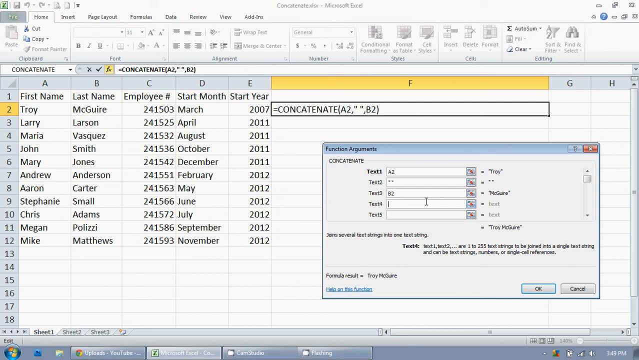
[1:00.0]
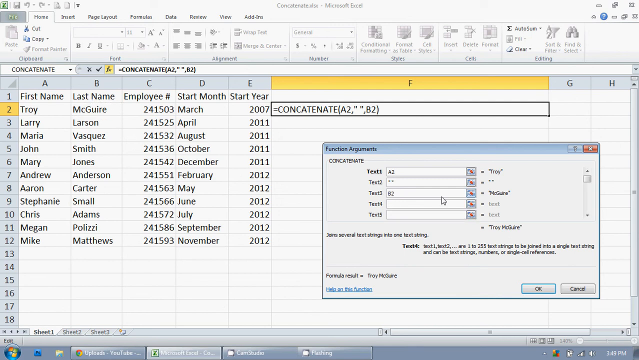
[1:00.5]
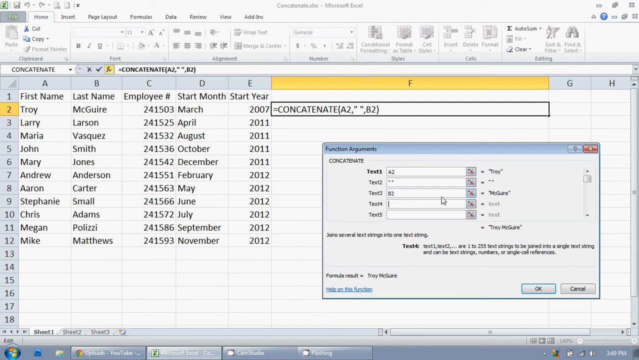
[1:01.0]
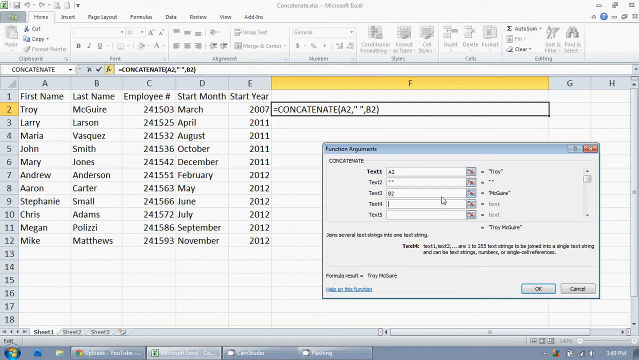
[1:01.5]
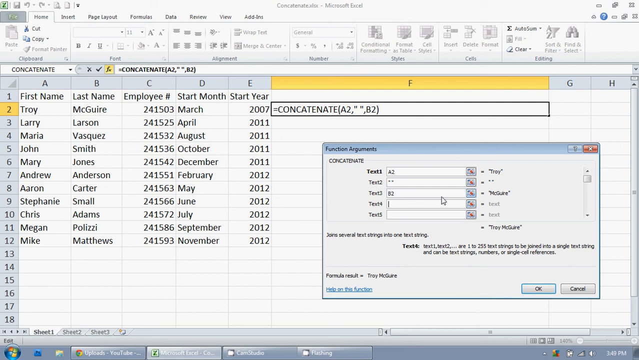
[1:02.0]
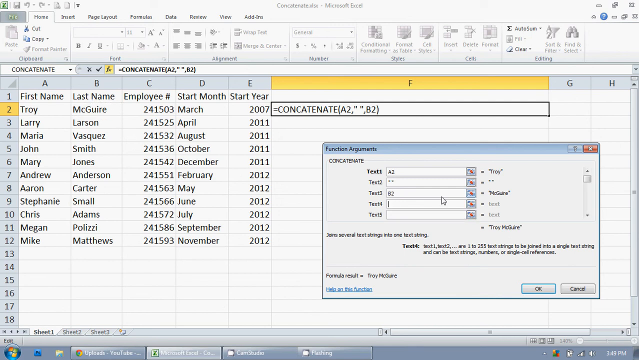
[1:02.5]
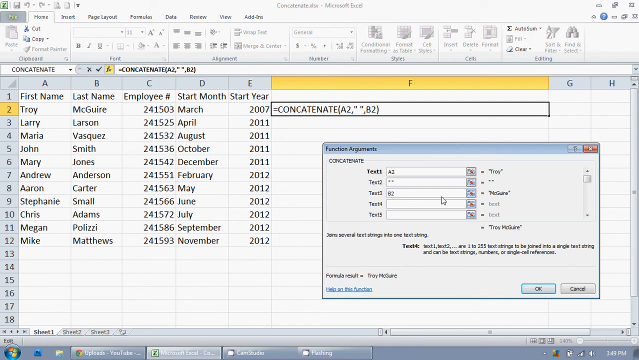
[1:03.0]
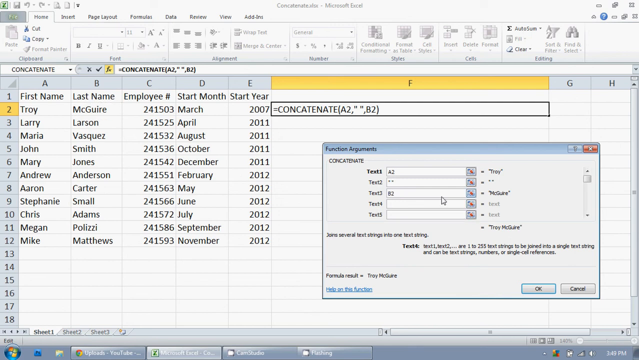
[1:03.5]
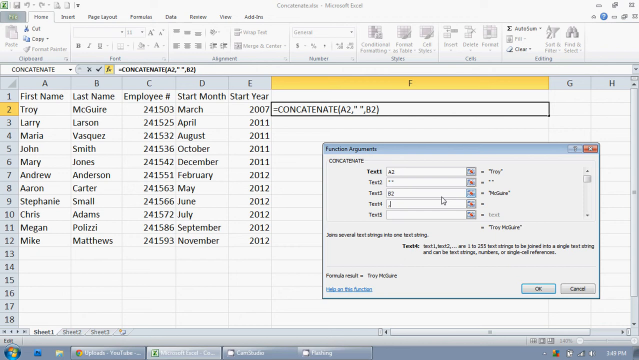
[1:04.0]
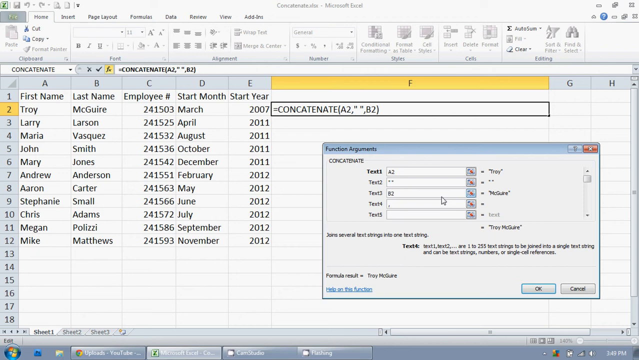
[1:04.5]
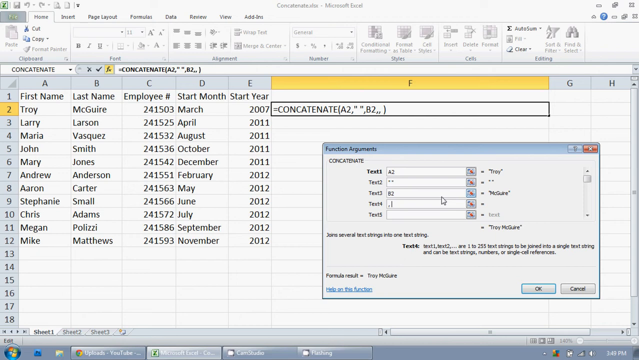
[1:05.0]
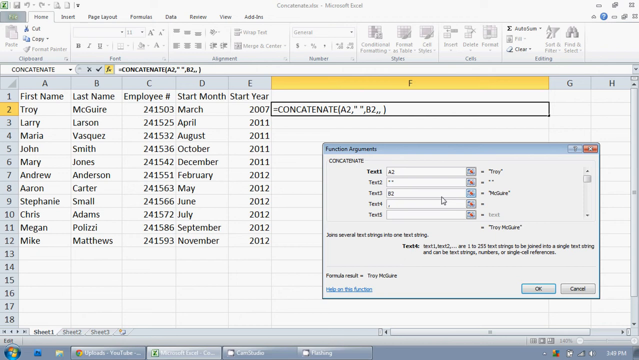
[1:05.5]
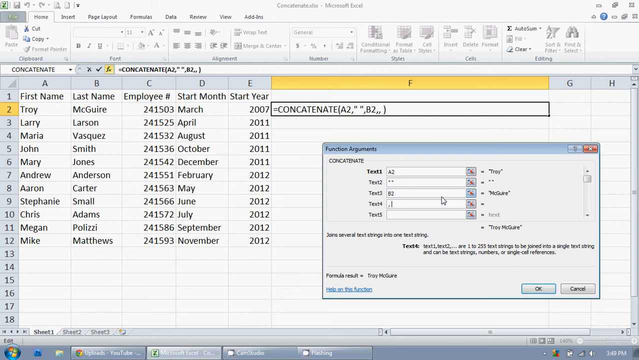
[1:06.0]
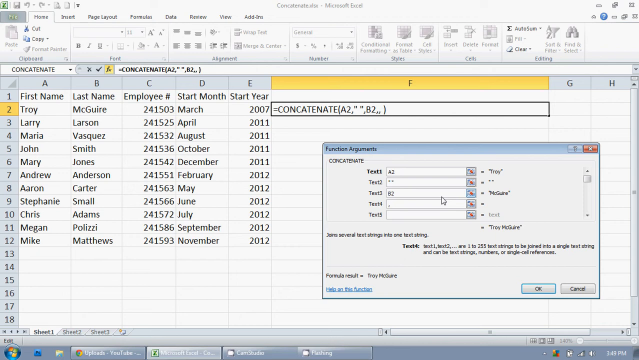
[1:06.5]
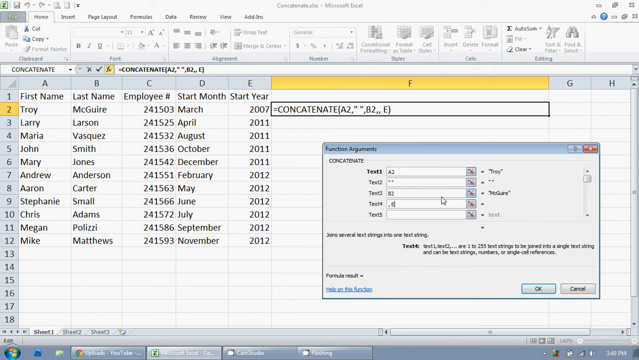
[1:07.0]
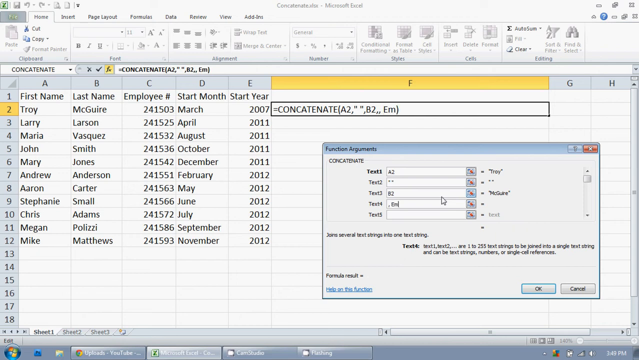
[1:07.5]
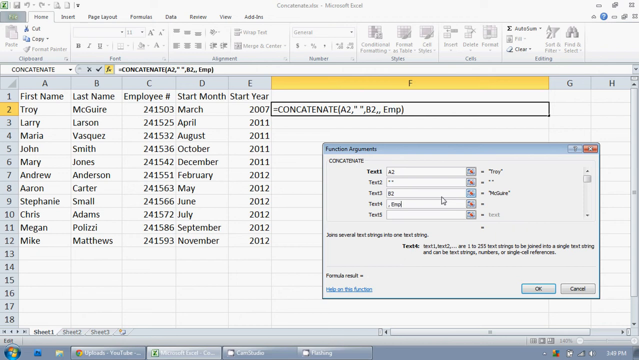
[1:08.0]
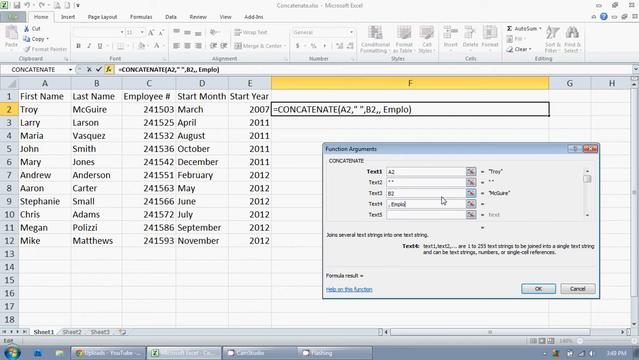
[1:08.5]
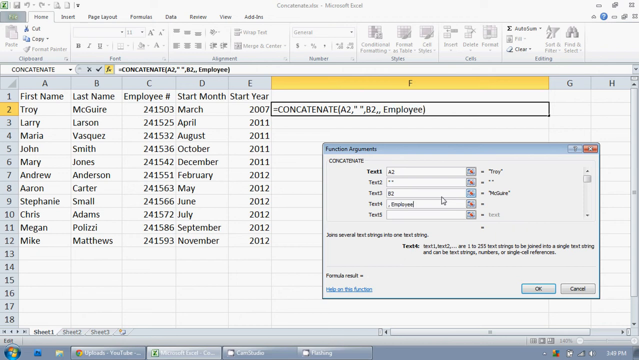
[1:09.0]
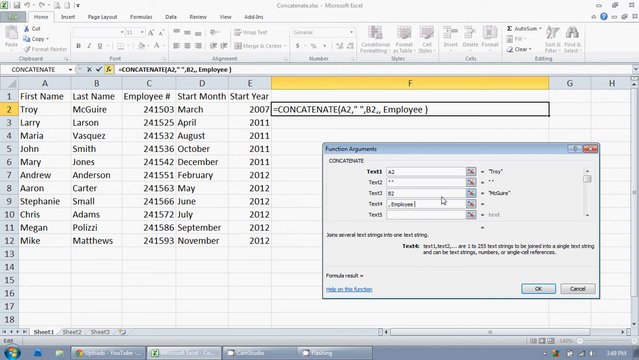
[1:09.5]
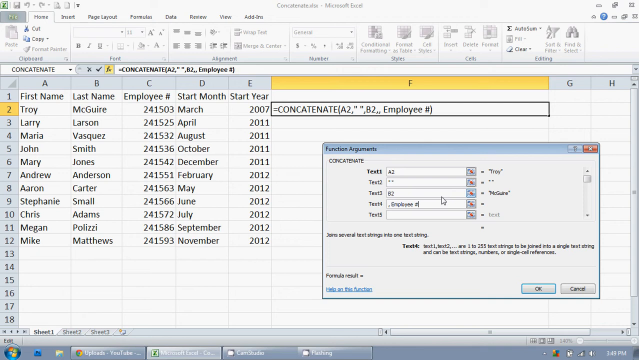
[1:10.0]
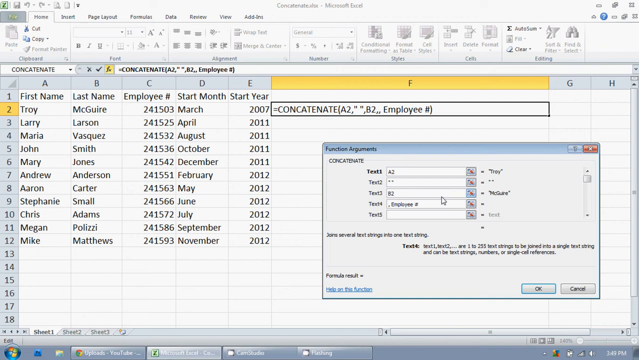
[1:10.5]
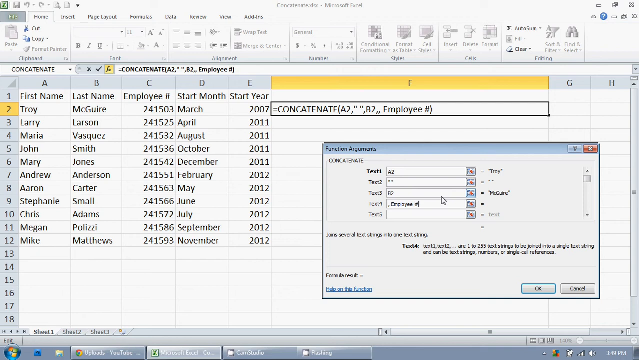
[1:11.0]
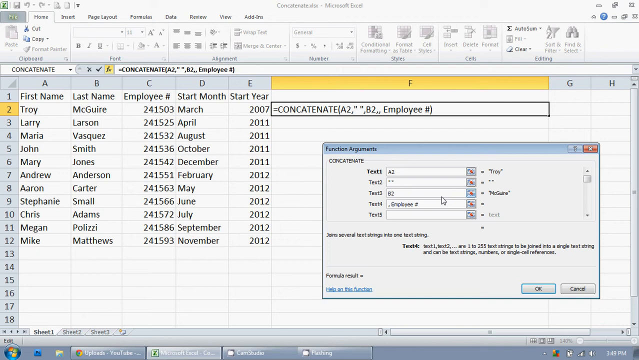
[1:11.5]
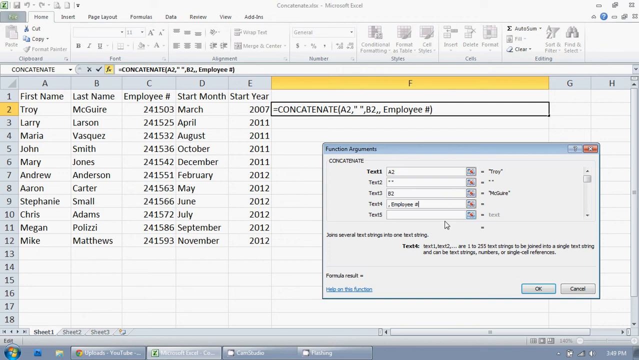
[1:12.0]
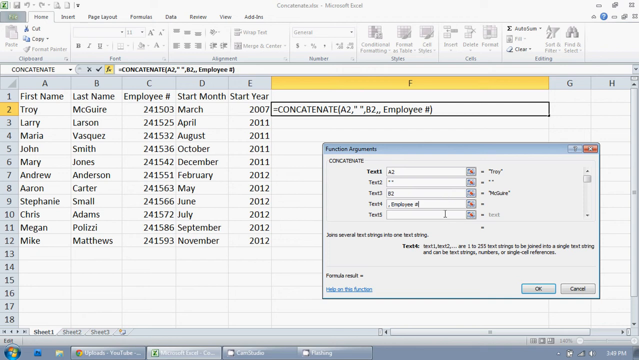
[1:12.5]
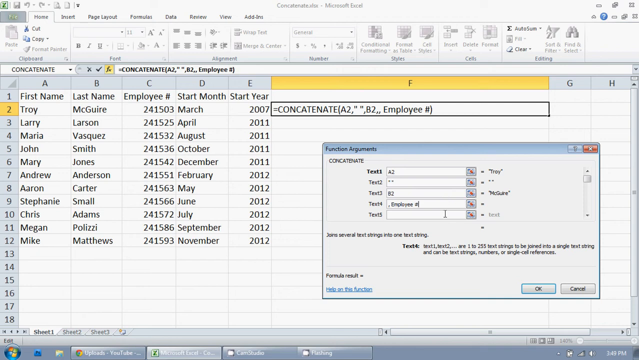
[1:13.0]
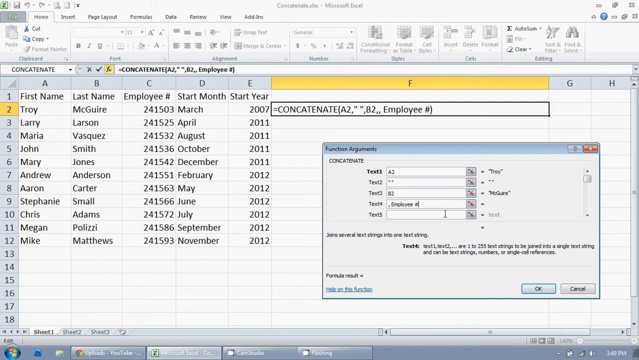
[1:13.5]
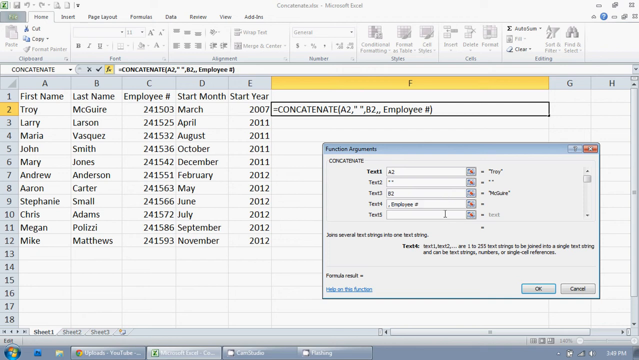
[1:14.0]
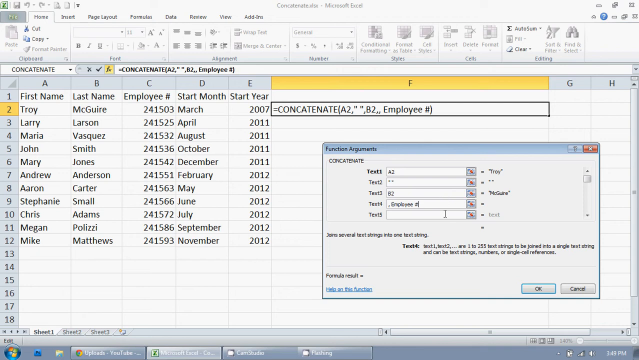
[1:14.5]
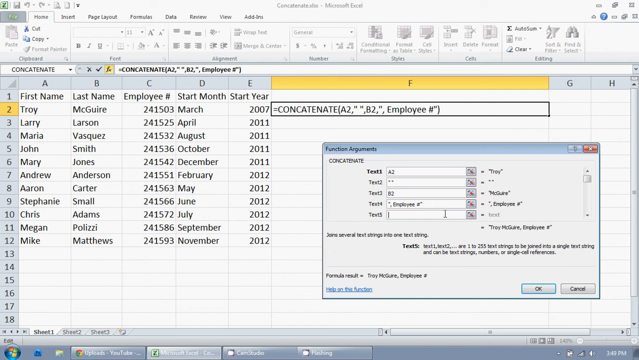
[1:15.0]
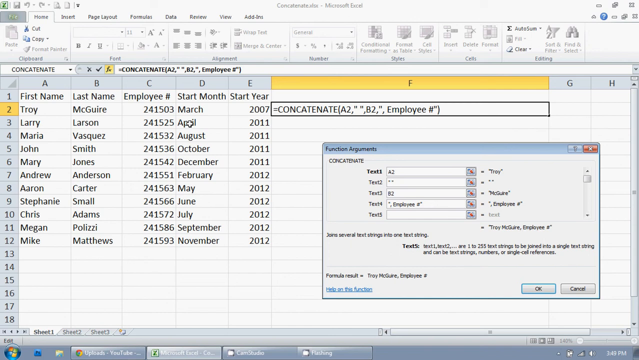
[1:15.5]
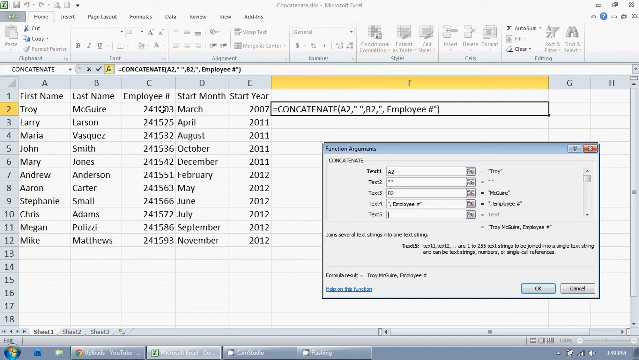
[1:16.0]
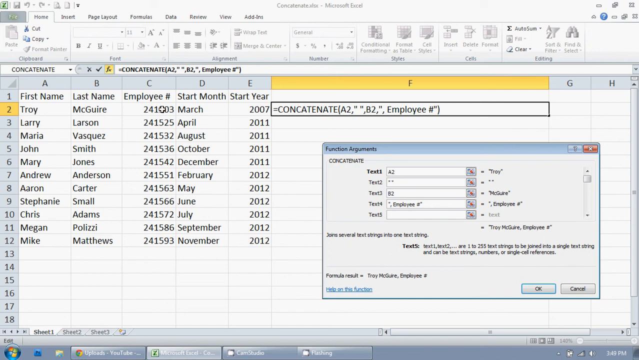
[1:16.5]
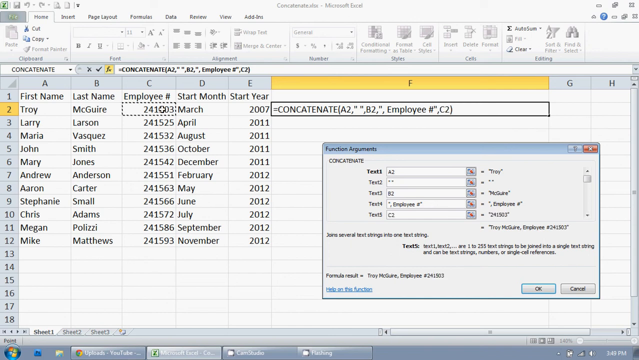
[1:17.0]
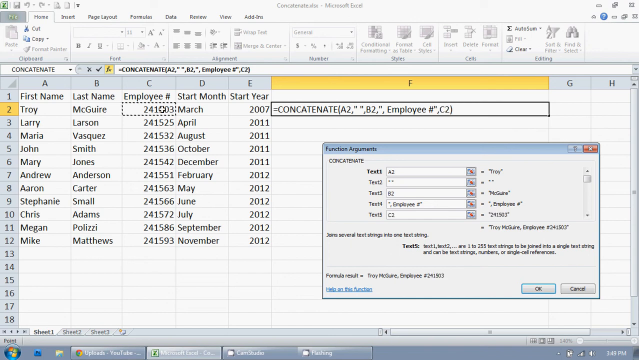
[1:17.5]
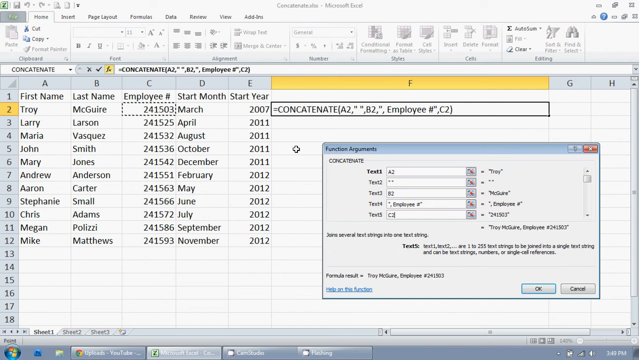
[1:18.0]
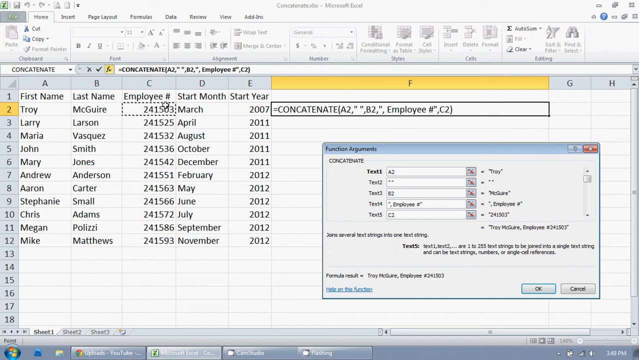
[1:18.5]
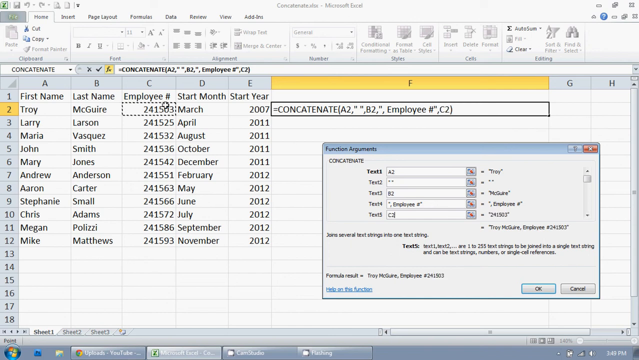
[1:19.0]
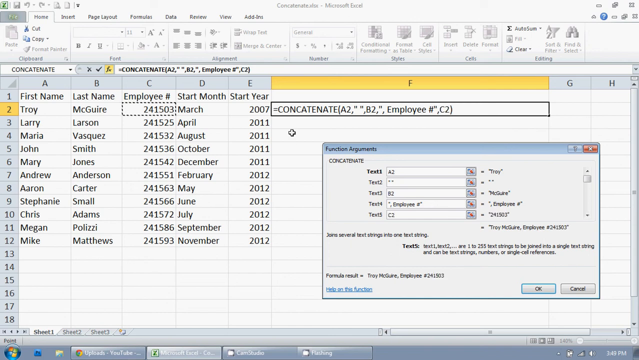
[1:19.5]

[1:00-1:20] The teacher types something in text4, and as he types, employee numbers appear in the previously selected cell in row 2, column F. He then clicks text5 and types c2, and numbers appear after text5: 241503, which matches the cell in the second row of column C, Troy's employee number. The mouse then moves to the cell below the cell being edited in the second row. The content of the cell being edited reads "= CONCATENATE(A2, " ",B2)". The text in the toolbar is very small and blurry, so its specific content cannot be made out.